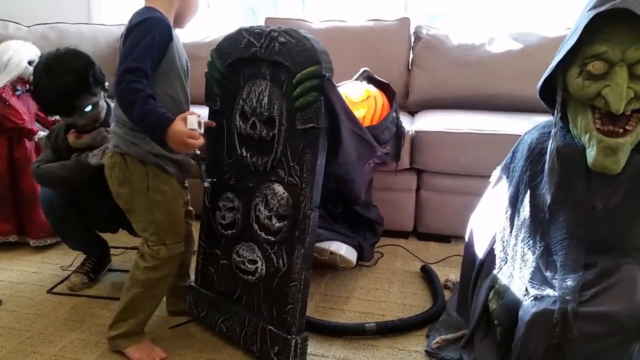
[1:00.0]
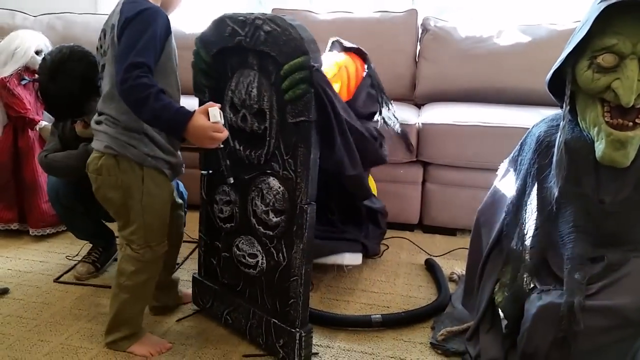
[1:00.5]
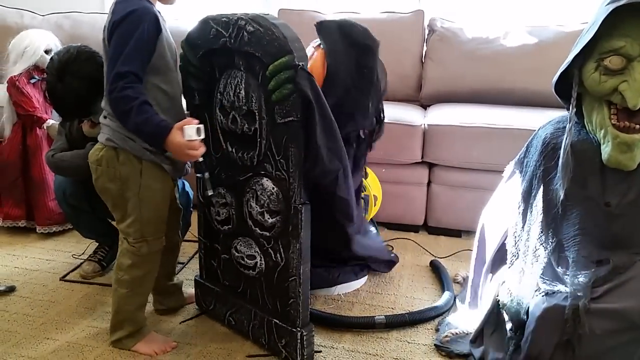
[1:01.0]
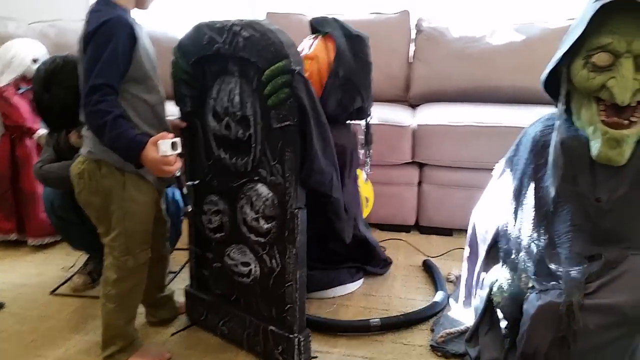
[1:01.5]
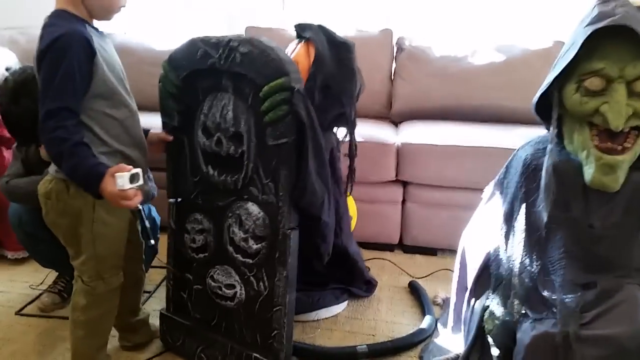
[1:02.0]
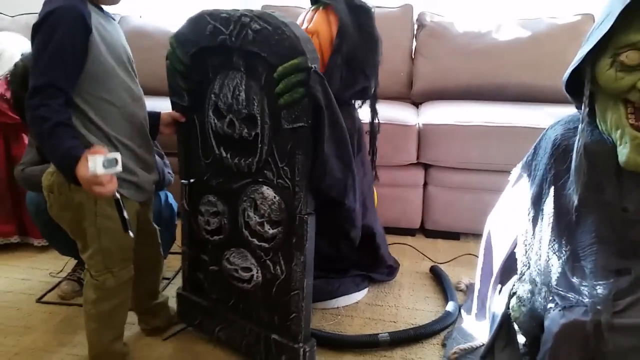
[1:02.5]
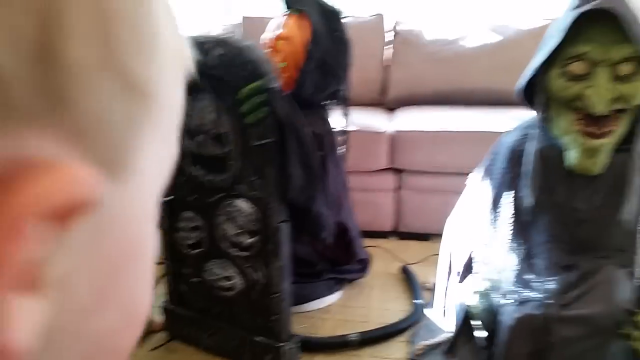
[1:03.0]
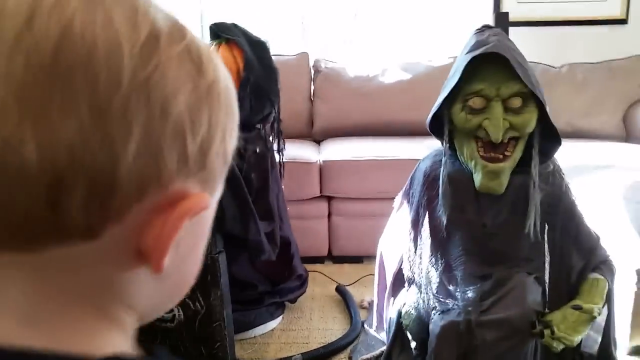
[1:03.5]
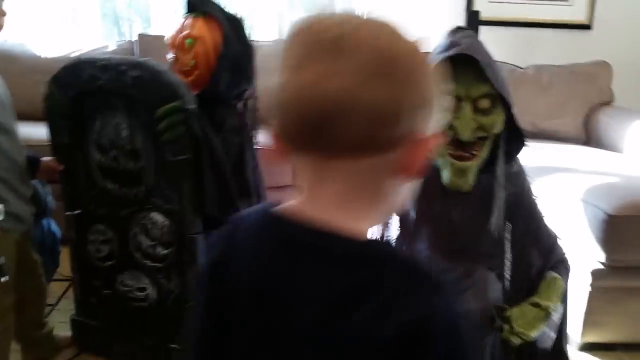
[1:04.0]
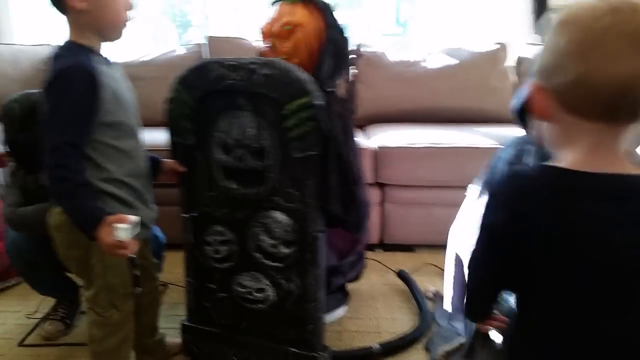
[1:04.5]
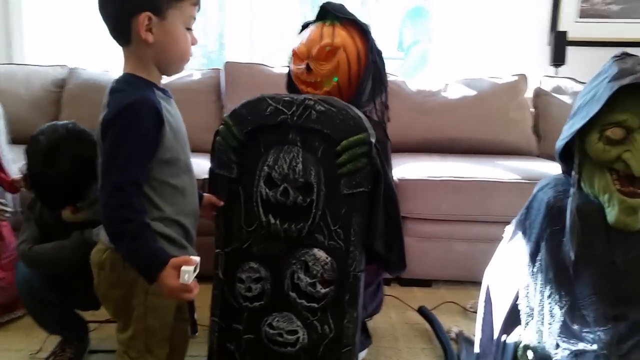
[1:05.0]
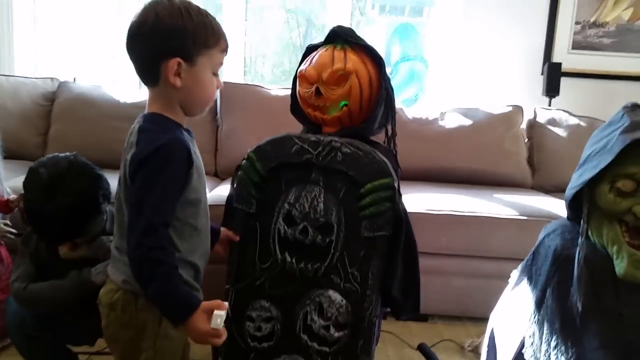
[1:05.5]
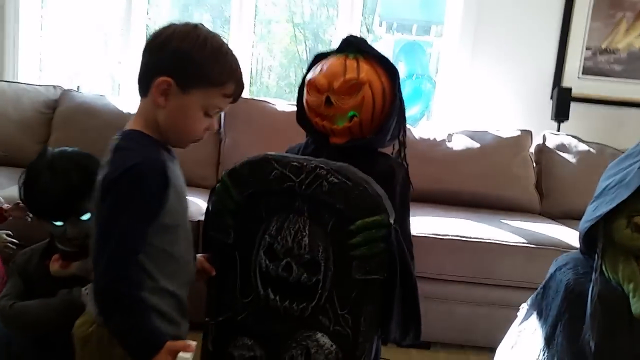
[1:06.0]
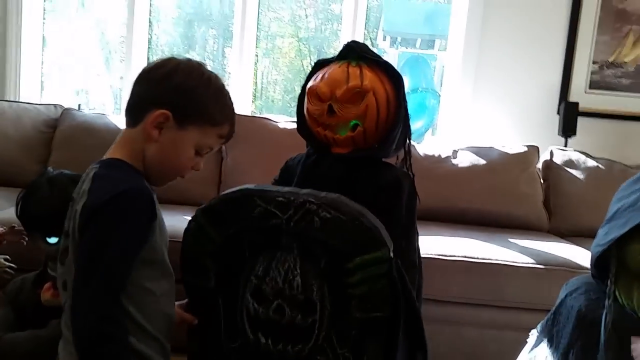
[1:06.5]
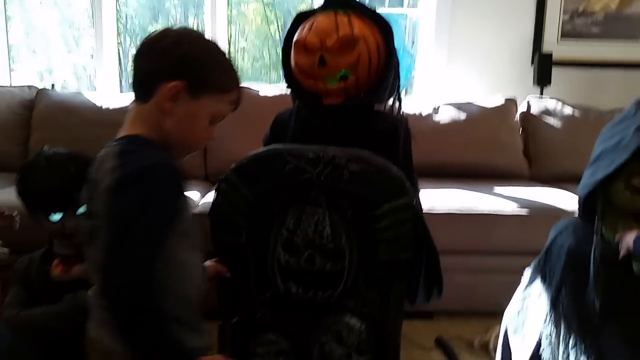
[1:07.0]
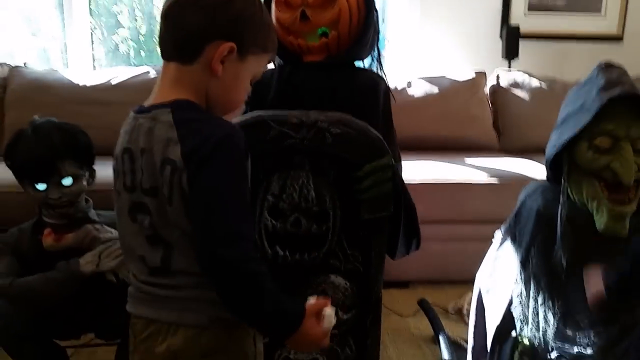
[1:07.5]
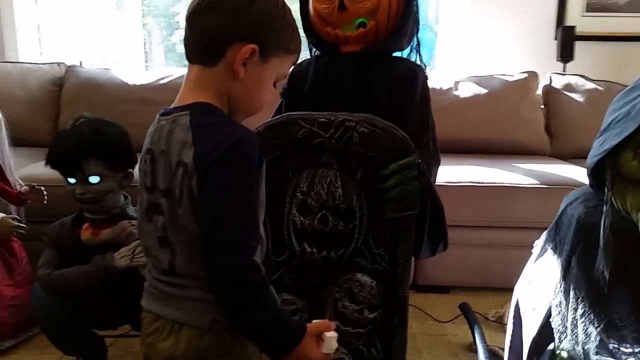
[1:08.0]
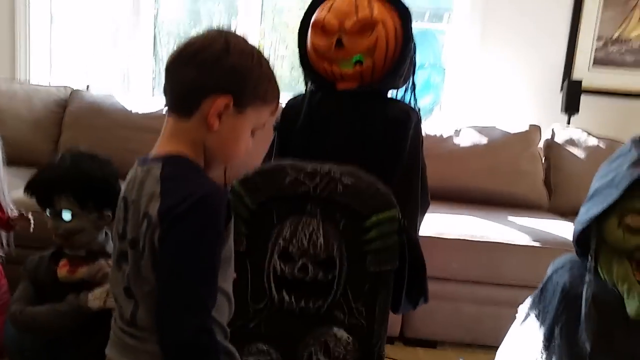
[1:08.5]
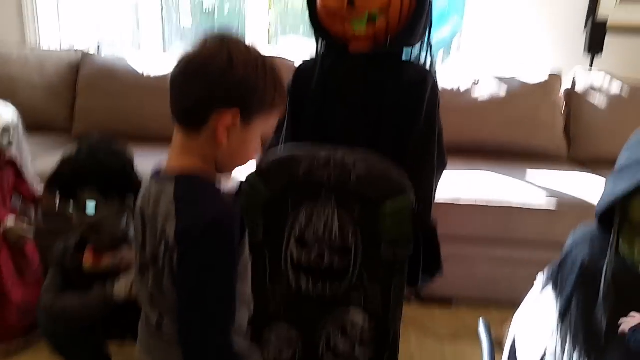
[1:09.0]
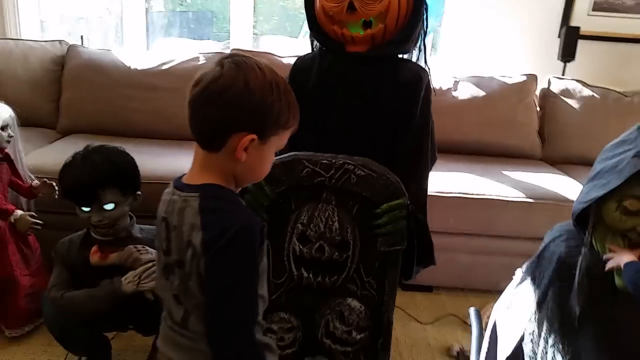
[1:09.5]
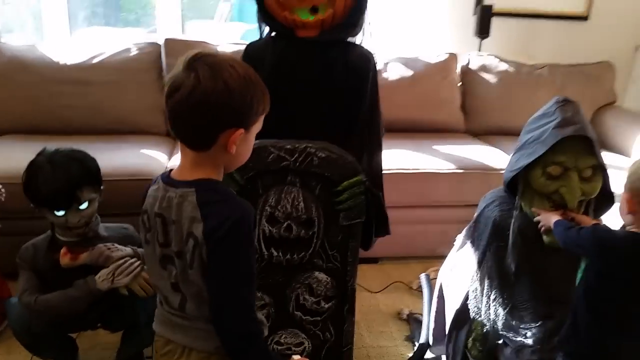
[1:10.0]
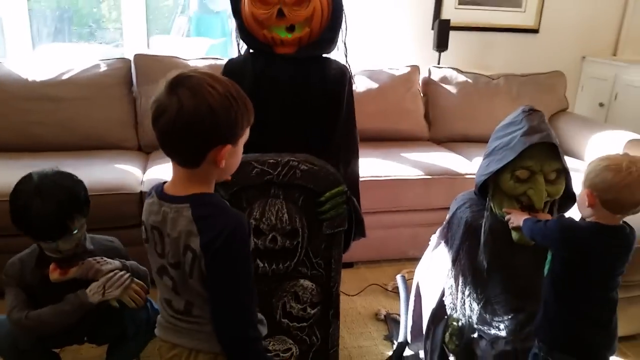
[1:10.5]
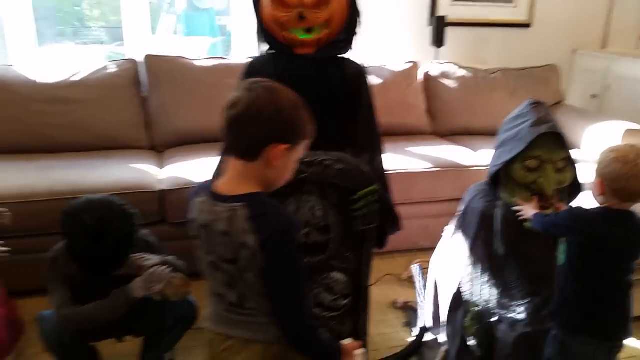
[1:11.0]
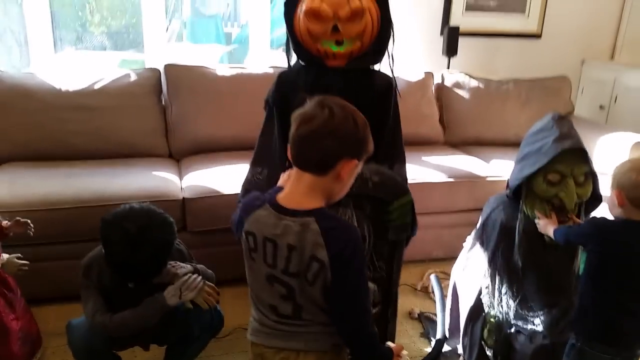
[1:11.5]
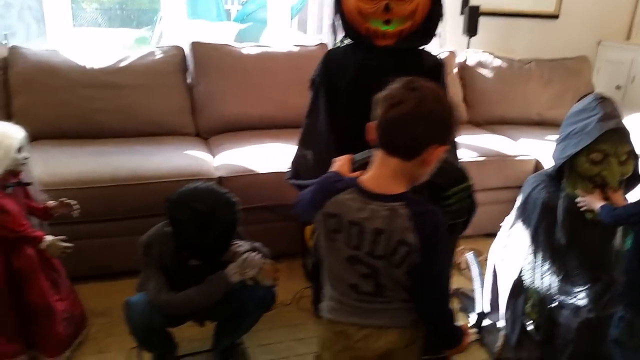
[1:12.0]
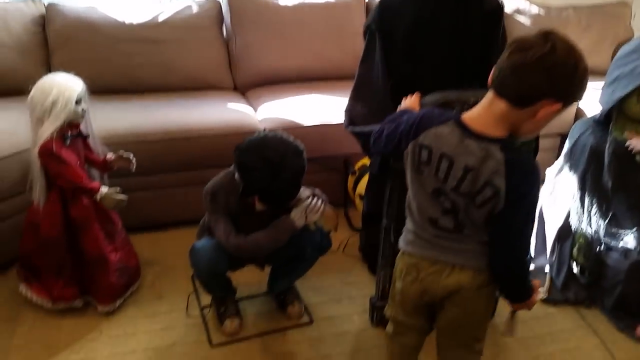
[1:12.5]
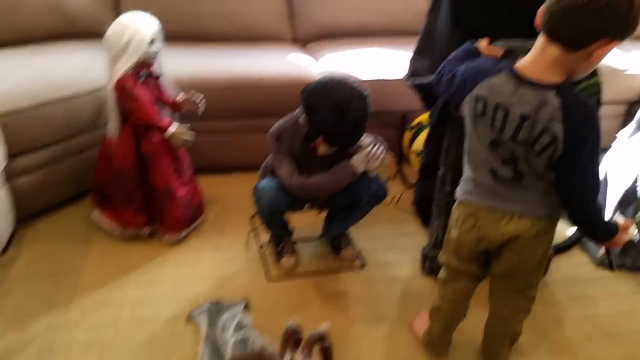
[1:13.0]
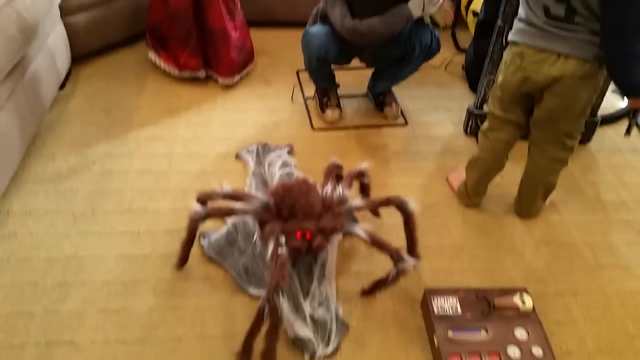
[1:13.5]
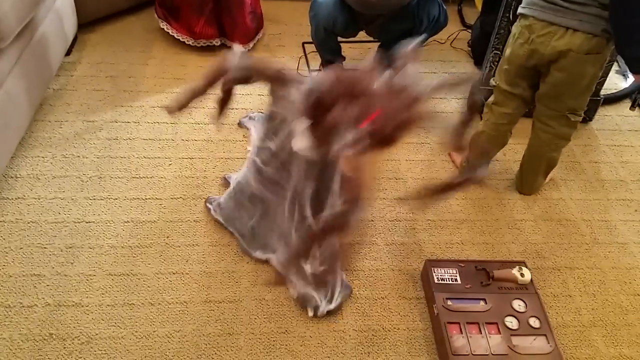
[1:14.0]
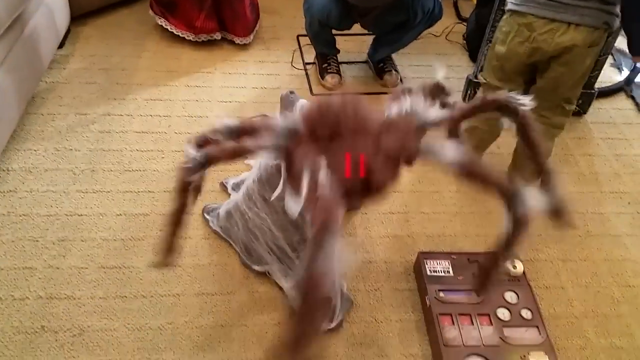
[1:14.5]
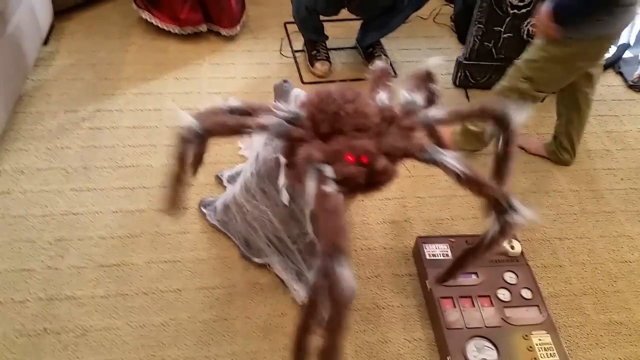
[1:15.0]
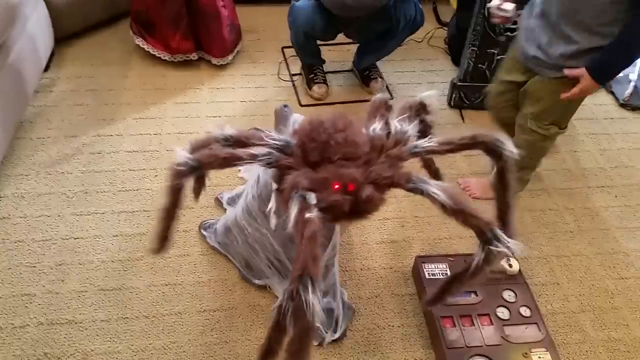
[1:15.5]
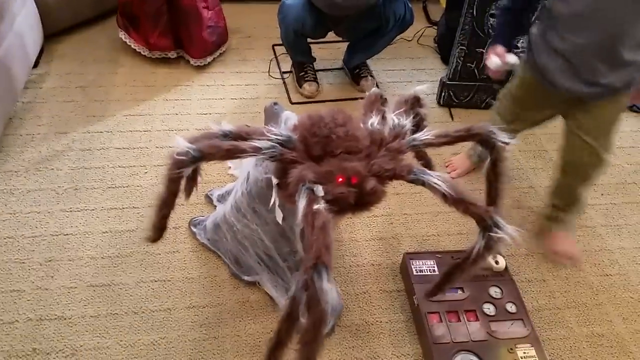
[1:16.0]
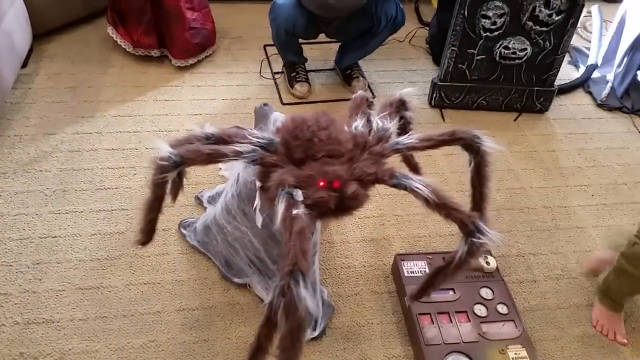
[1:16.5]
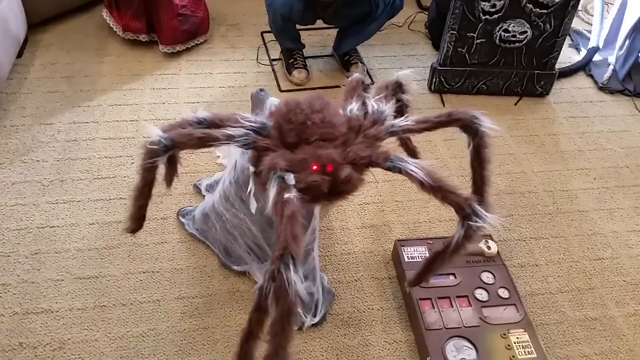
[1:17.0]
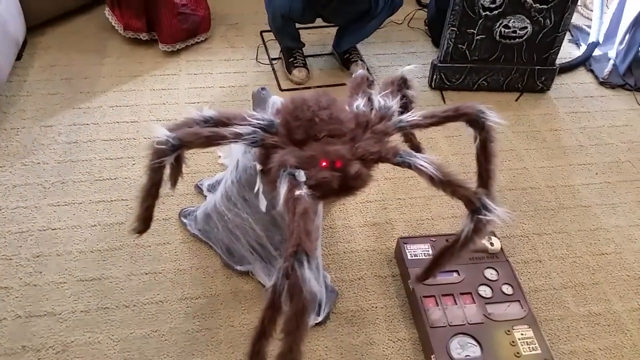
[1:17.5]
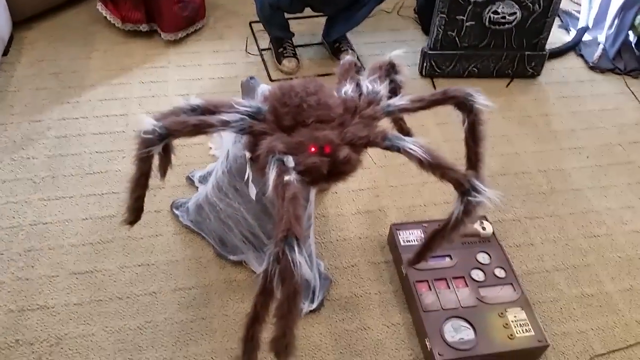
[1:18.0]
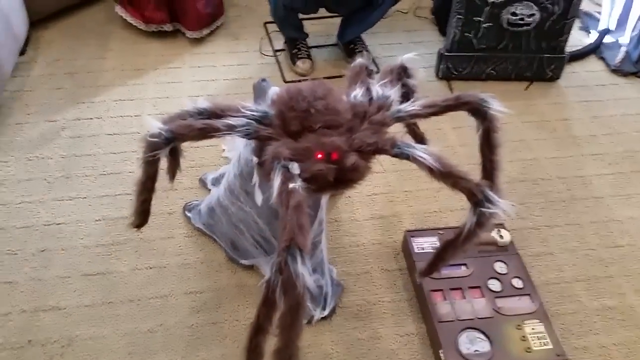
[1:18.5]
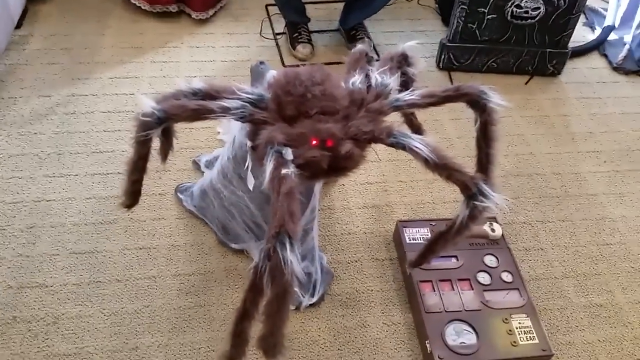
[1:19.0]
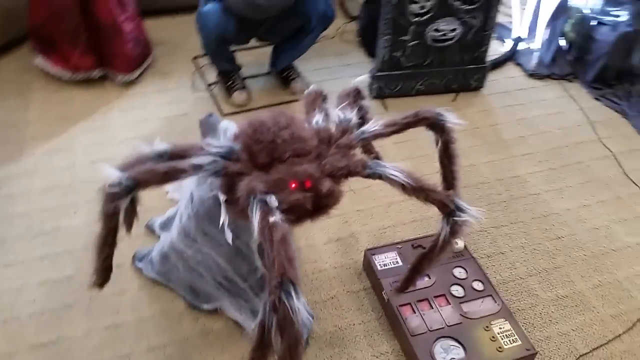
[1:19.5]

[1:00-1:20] The brown-haired boy appears to be trying to fix the gravestone he knocked over. The view focuses more on the tarantula animatronic, whose base is covered in spider web. The tarantula is light brown with gray areas and has beady little glowing red eyes, and it jumps up from the ground toward the camera. More of the girl doll in the red burgundy dress is visible; her face appears light green or white, almost like a zombie. A green glow comes from the mouth of the jack-o-lantern head. The sneakers on the boy animatronic with the glowing eyes look like dirty old Converse, and he has dark black hair.